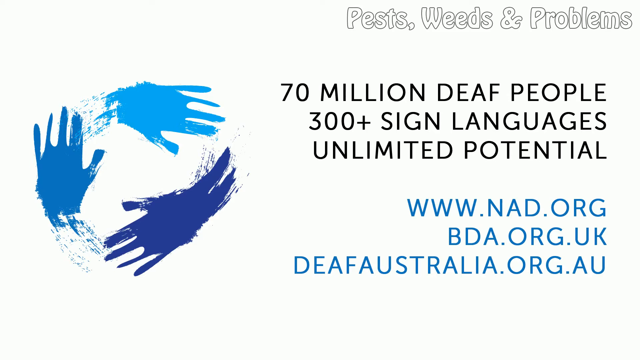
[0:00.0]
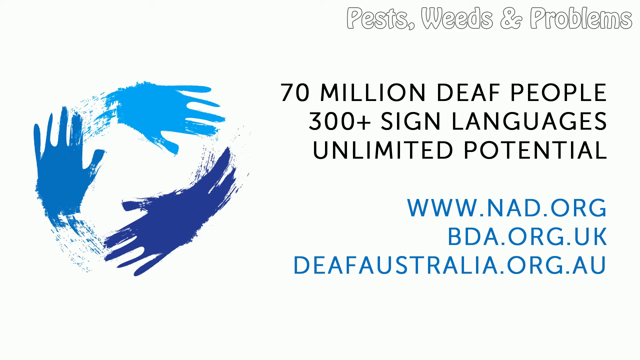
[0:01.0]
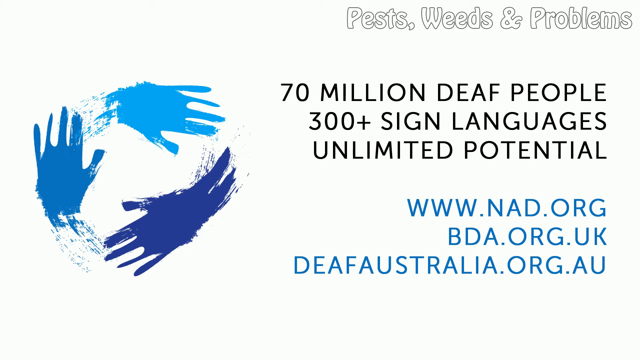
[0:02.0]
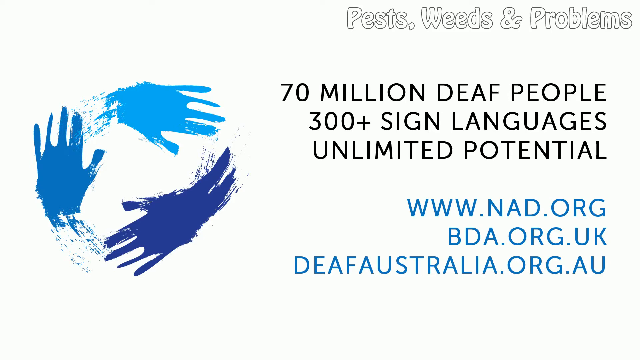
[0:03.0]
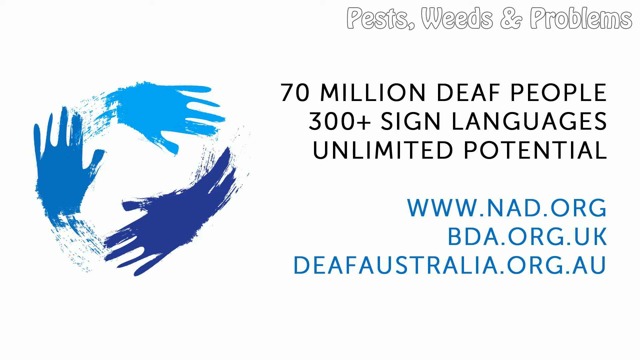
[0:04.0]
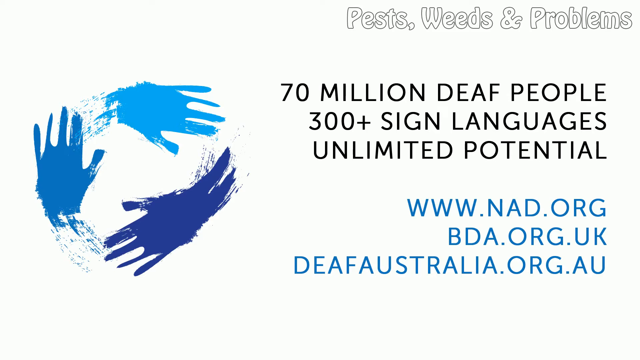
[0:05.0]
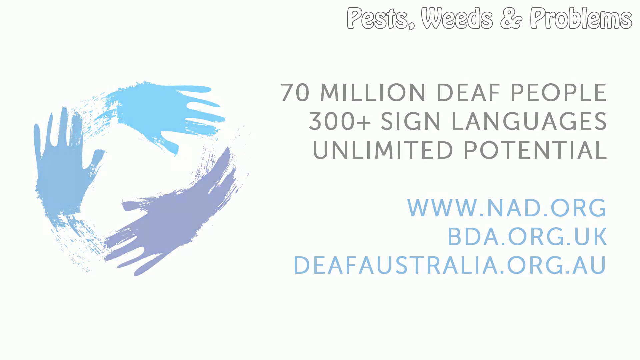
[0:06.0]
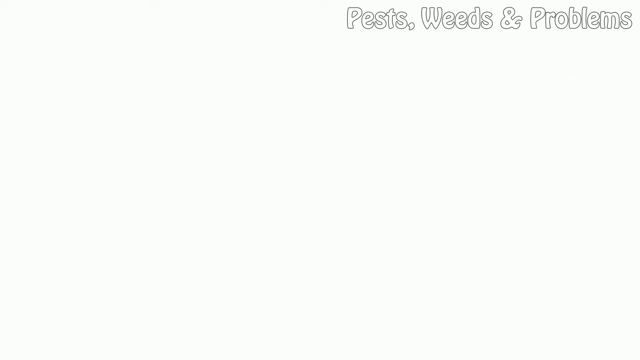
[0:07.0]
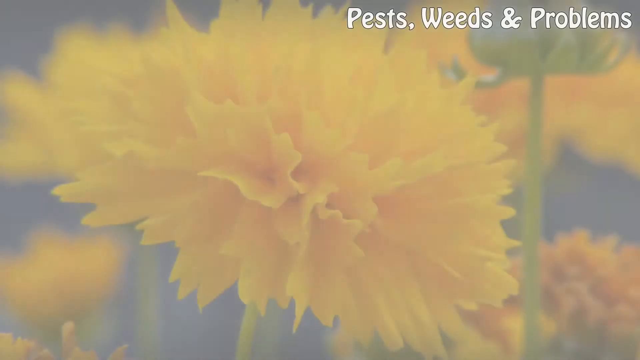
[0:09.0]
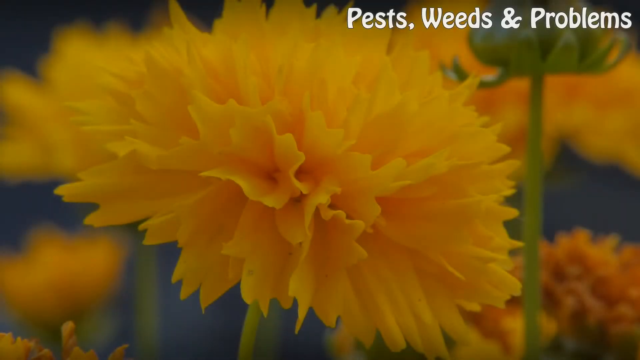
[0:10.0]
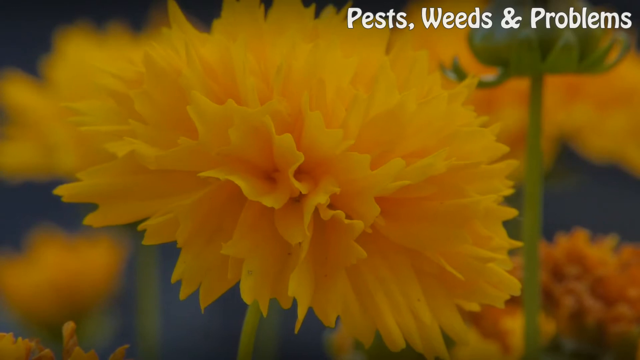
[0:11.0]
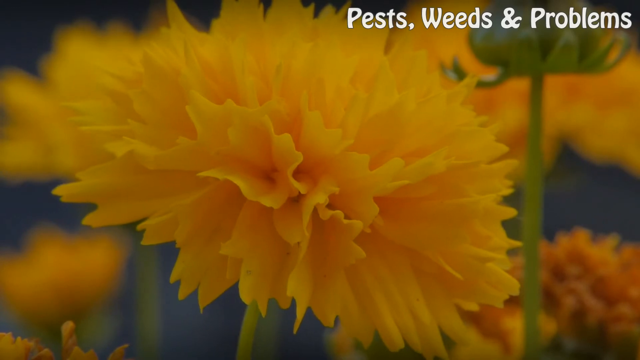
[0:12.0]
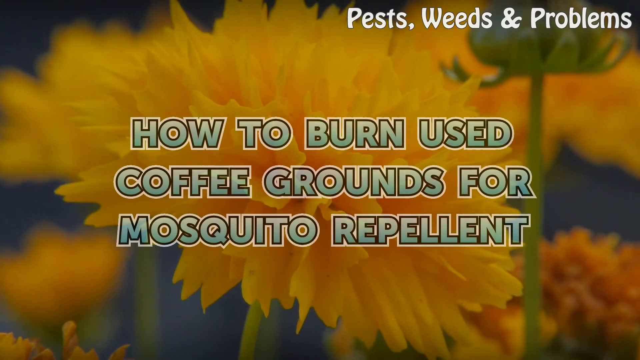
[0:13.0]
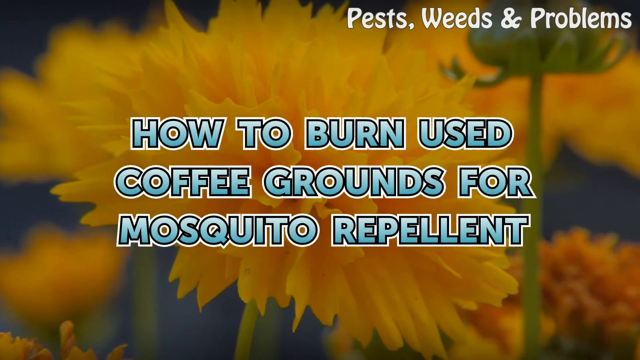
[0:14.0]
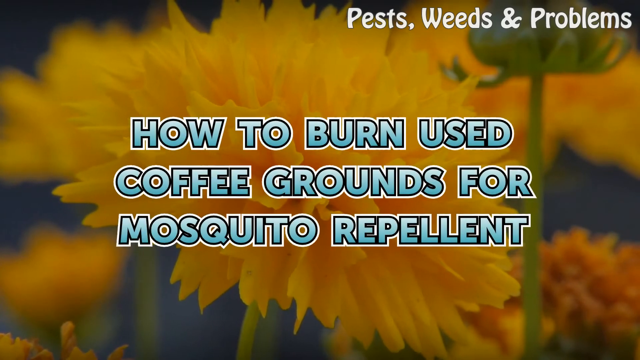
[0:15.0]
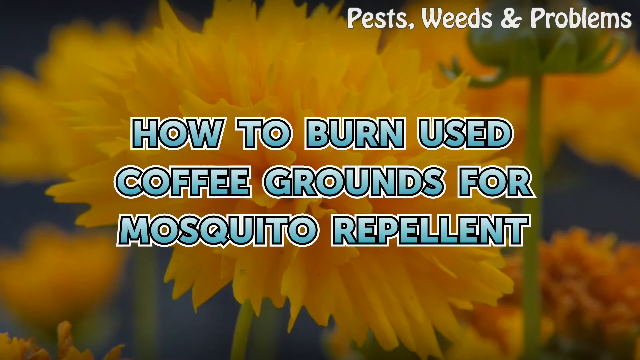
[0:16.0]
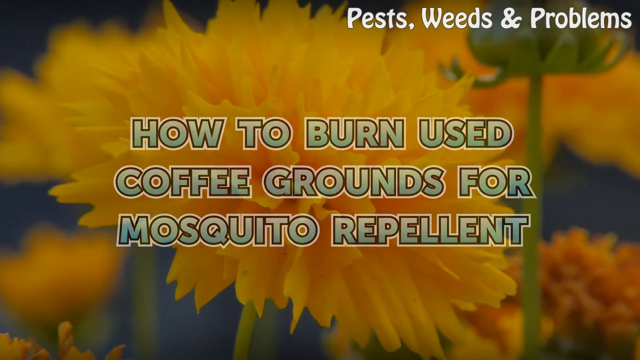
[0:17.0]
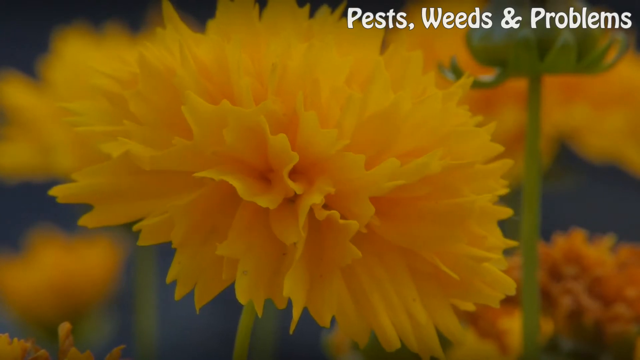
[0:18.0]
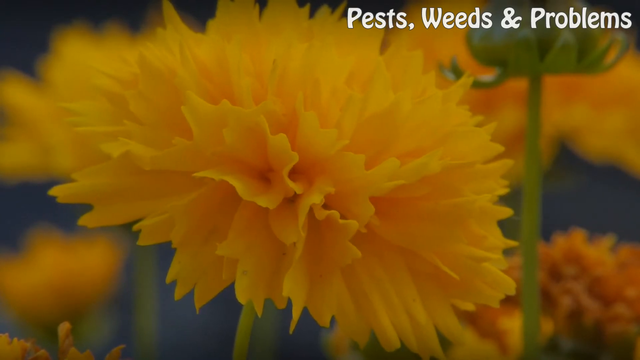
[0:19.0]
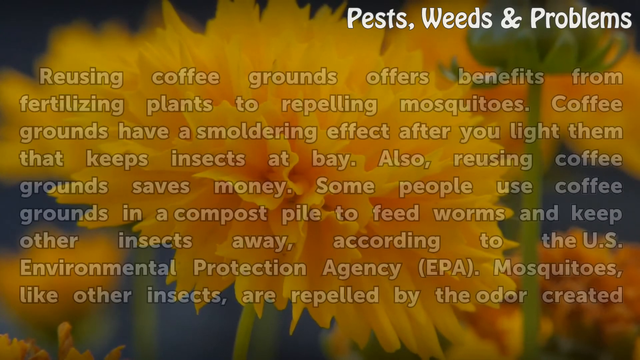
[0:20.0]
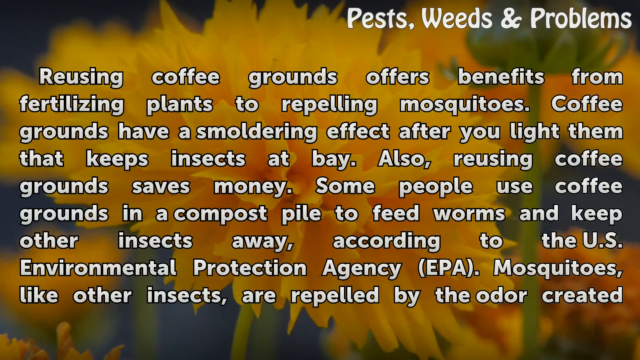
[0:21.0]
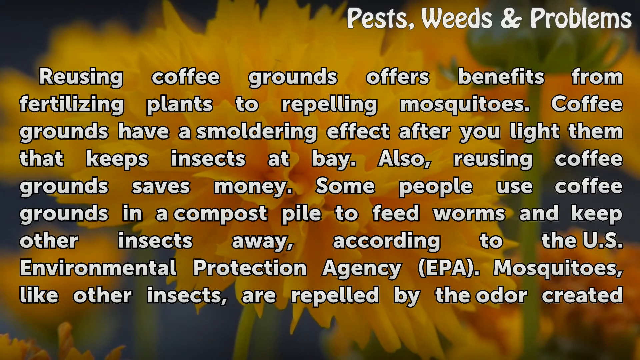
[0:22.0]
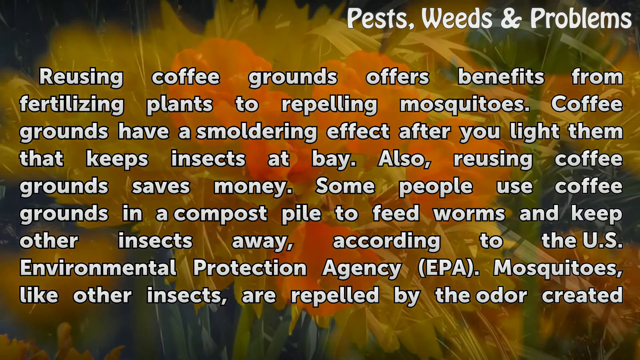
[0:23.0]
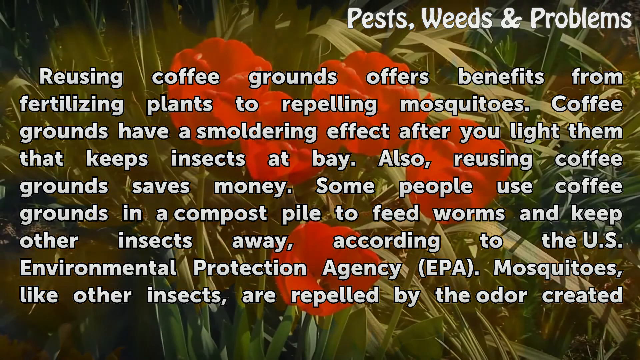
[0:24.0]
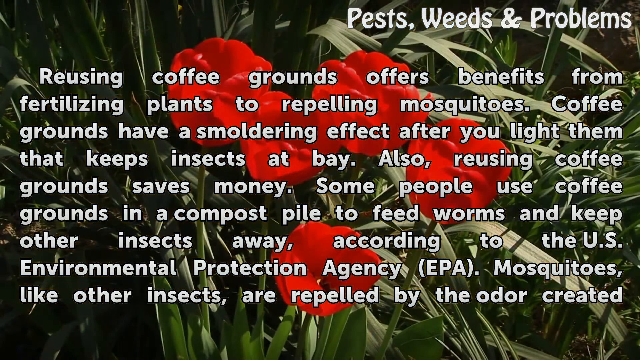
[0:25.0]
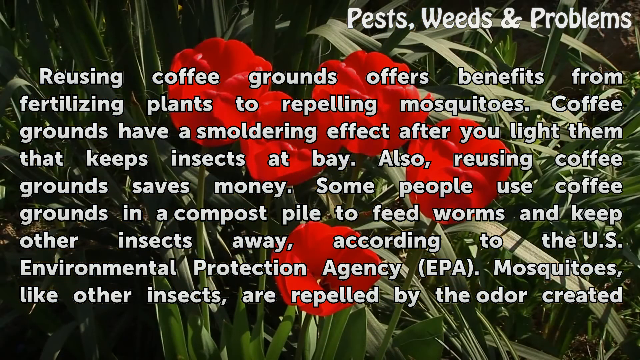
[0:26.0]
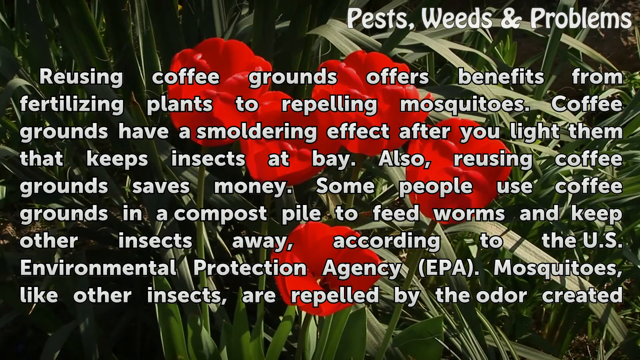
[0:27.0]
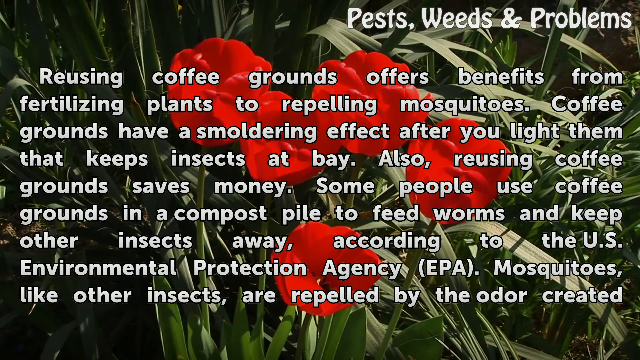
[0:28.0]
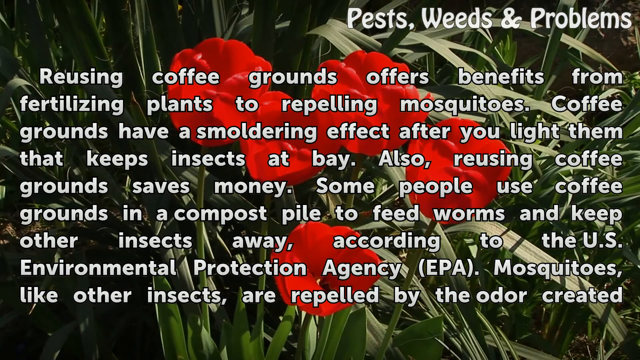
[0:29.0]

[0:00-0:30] The video opens on a screen reading "70 million deaf people, 300 plus sign languages, unlimited potential," followed by three website addresses. The upper text is black, in all capital letters, and the lower text is blue, in all capital letters. On the left is a circle of three hands: one light blue, one middle blue and one darker royal blue. Each looks like a left hand, and they go around in a clockwise pattern with the fingers going forward. The upper right corner reads "pests, weeds, and problems." The page fades, and a picture of a yellowish-orange flower appears, swaying slightly in the breeze. Behind it are other flowers just like it, blurred out. Text reads "How to Burn Used Coffee Grounds for Mosquito Repellent."